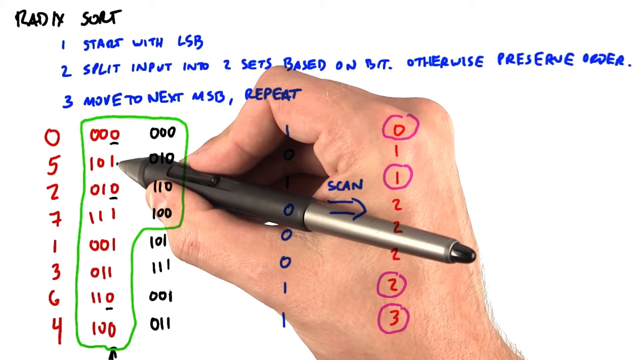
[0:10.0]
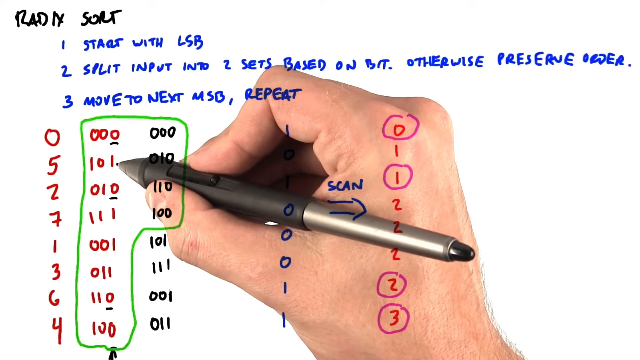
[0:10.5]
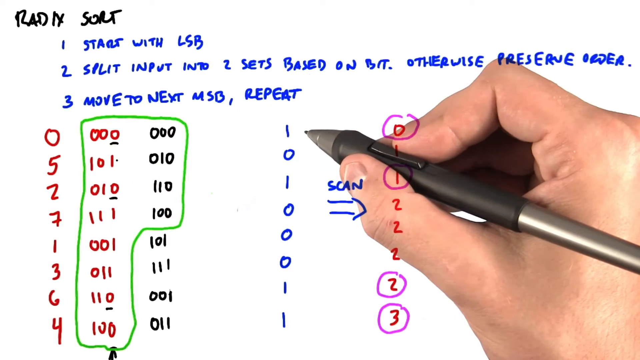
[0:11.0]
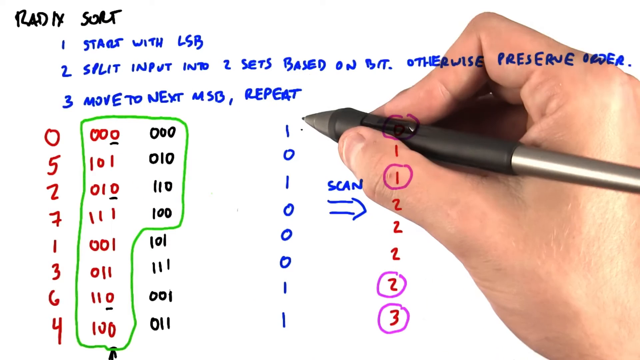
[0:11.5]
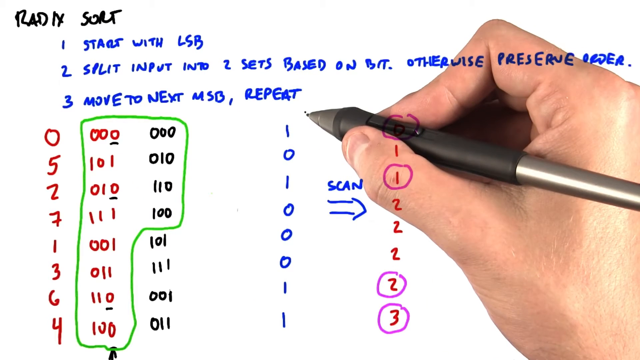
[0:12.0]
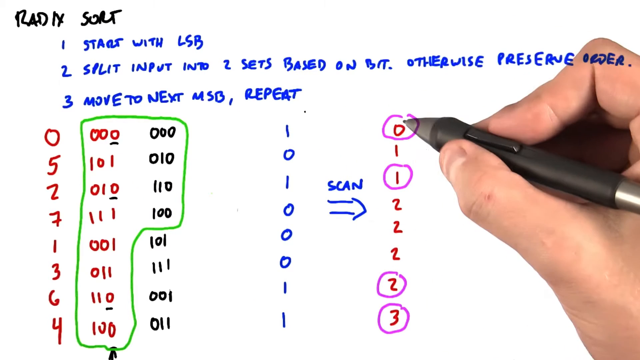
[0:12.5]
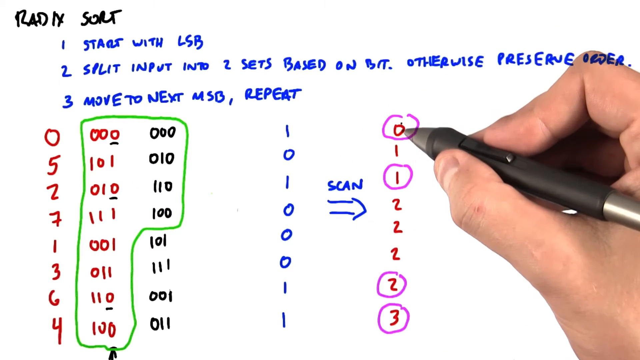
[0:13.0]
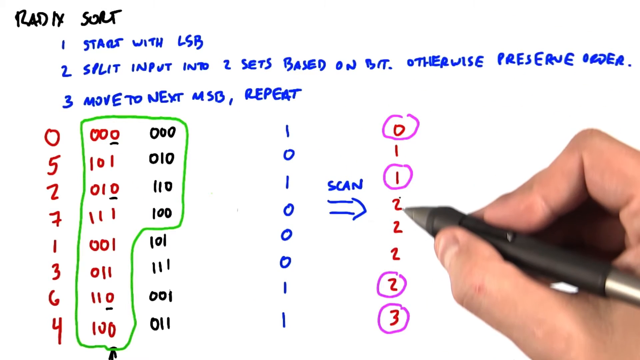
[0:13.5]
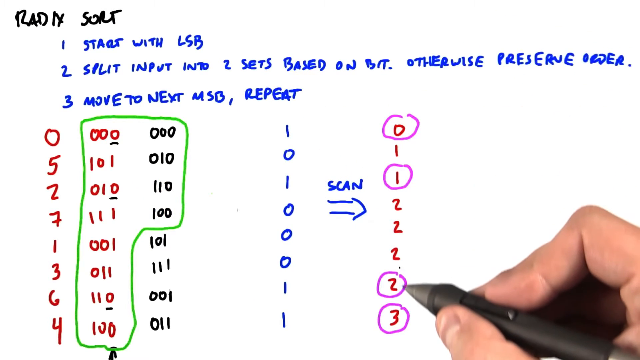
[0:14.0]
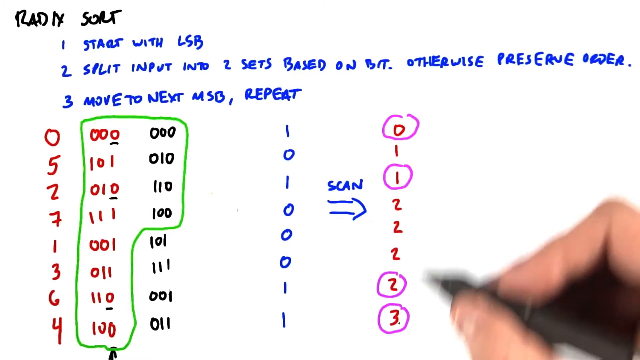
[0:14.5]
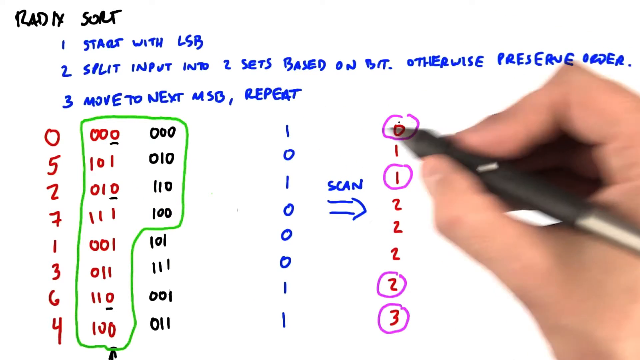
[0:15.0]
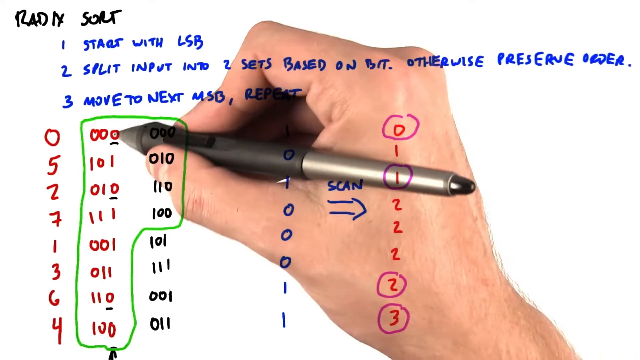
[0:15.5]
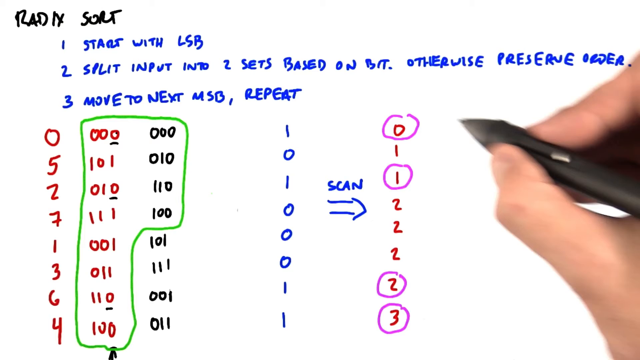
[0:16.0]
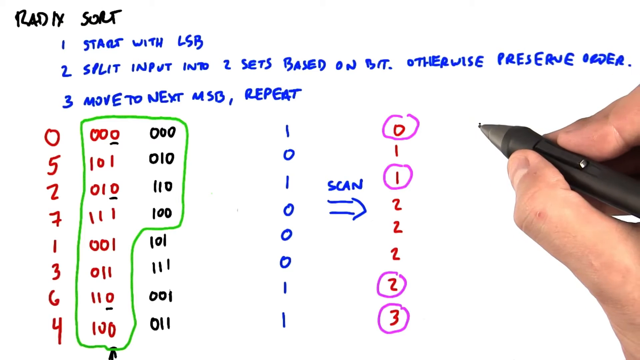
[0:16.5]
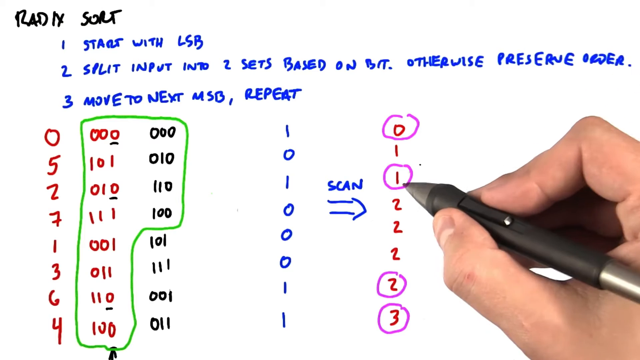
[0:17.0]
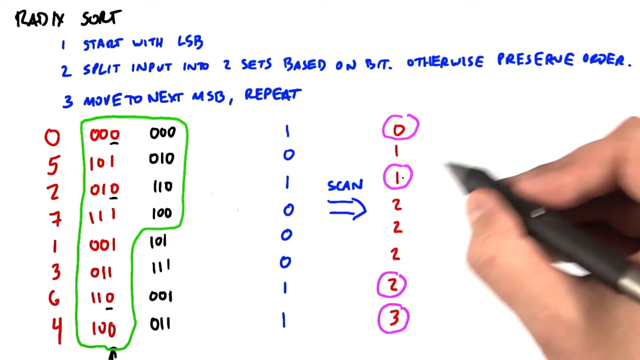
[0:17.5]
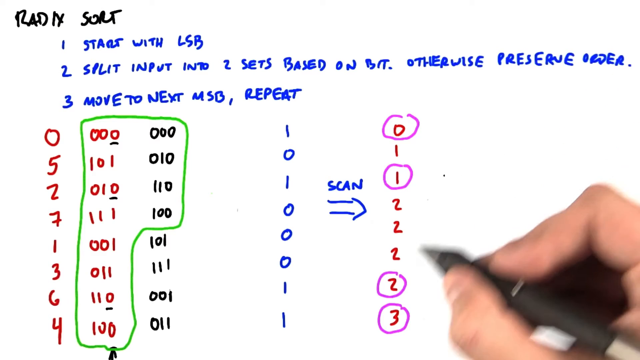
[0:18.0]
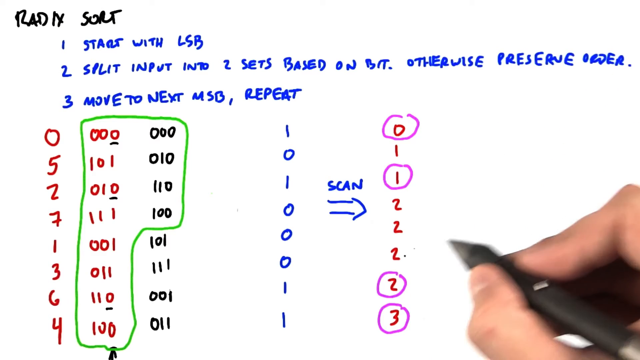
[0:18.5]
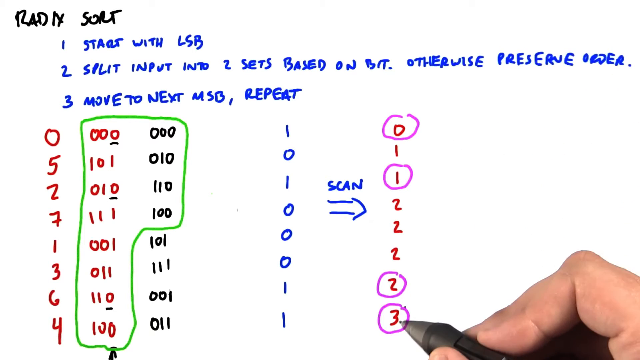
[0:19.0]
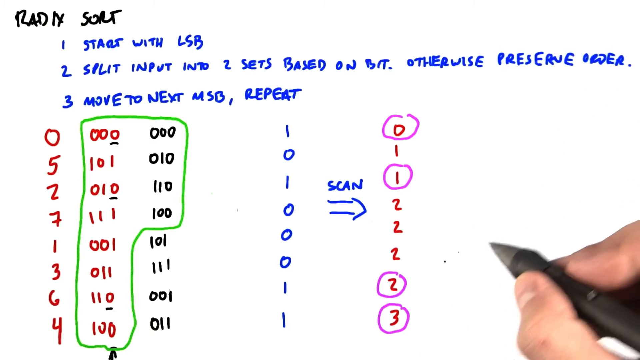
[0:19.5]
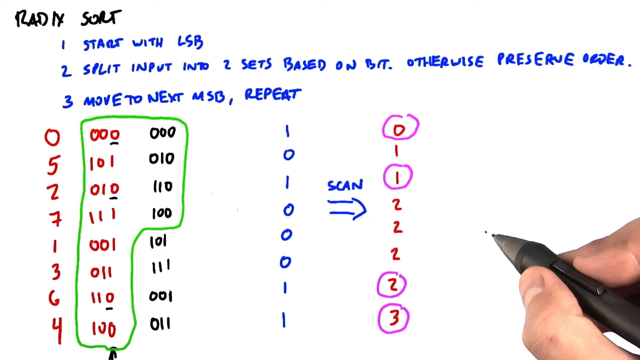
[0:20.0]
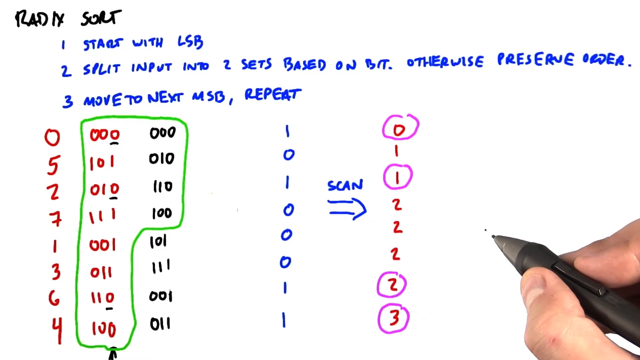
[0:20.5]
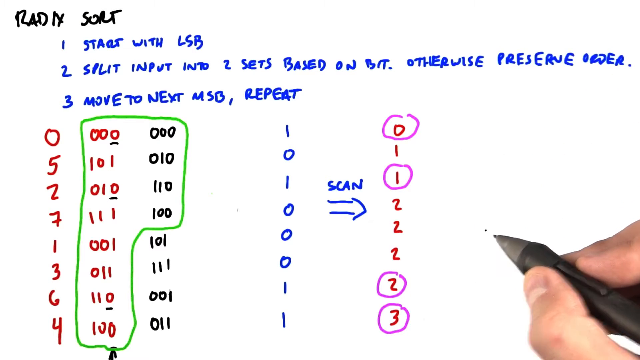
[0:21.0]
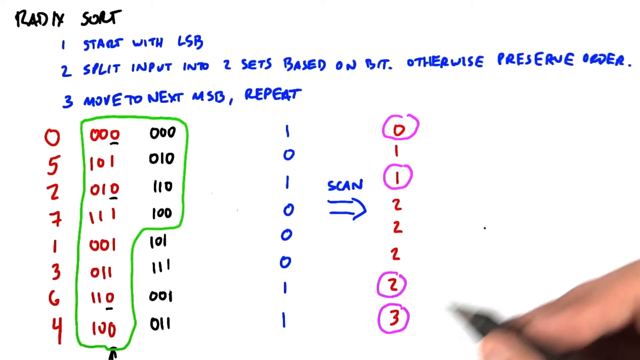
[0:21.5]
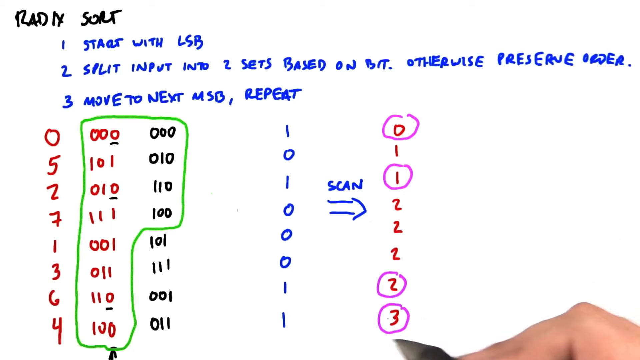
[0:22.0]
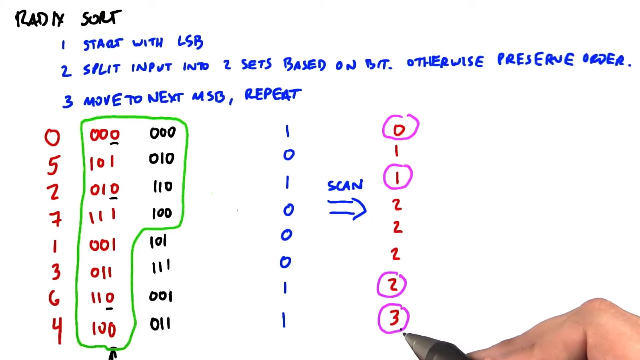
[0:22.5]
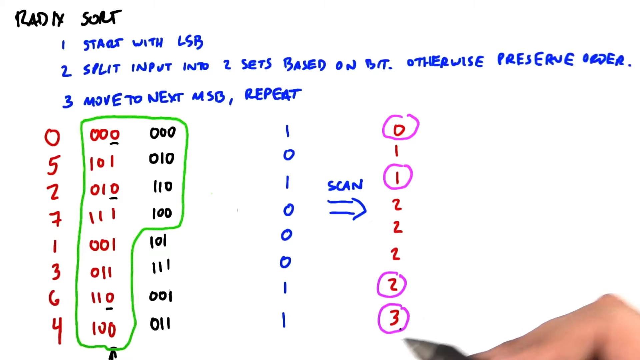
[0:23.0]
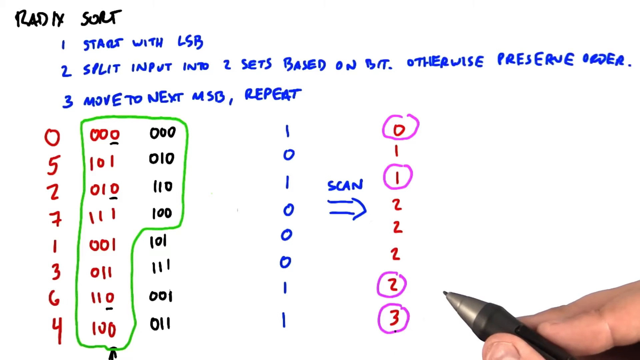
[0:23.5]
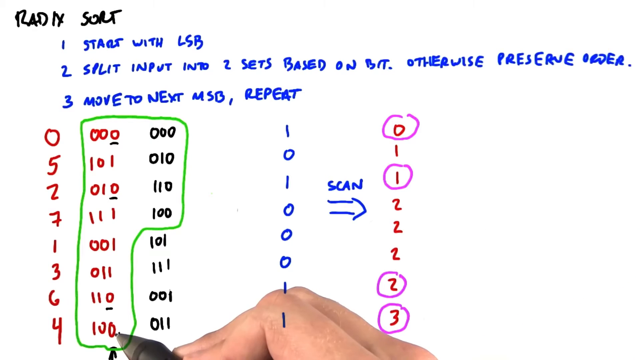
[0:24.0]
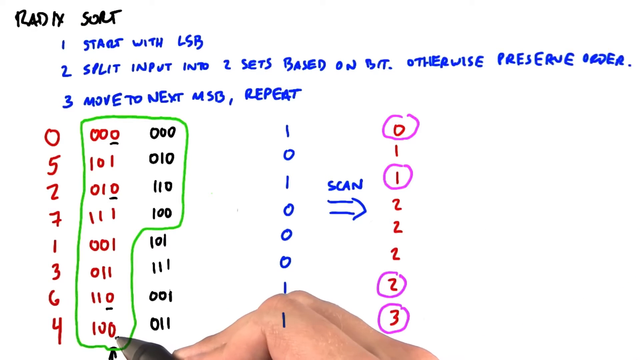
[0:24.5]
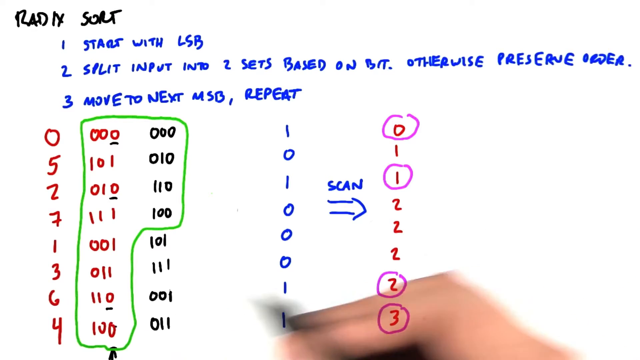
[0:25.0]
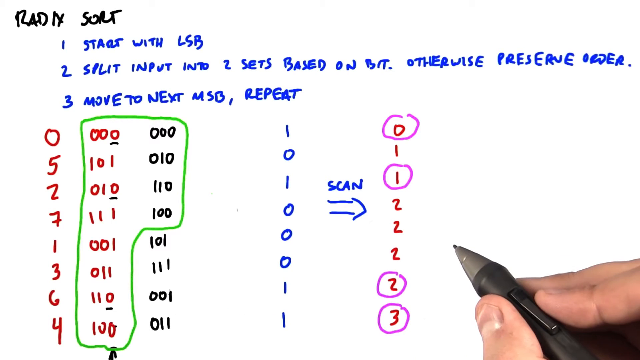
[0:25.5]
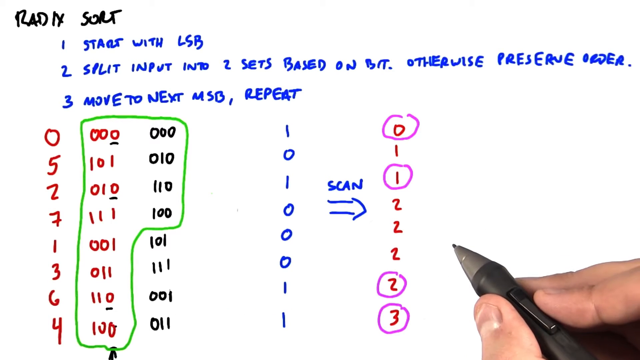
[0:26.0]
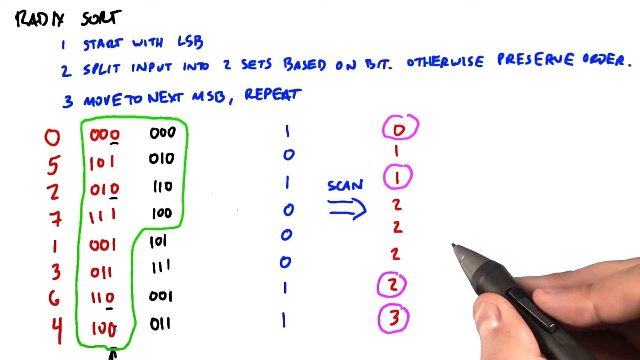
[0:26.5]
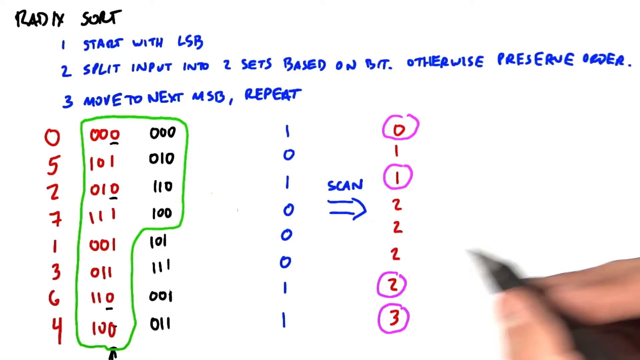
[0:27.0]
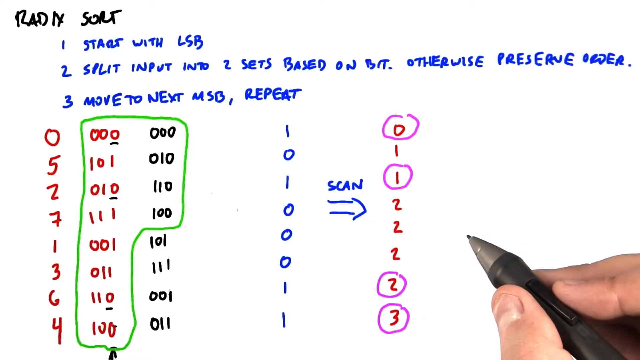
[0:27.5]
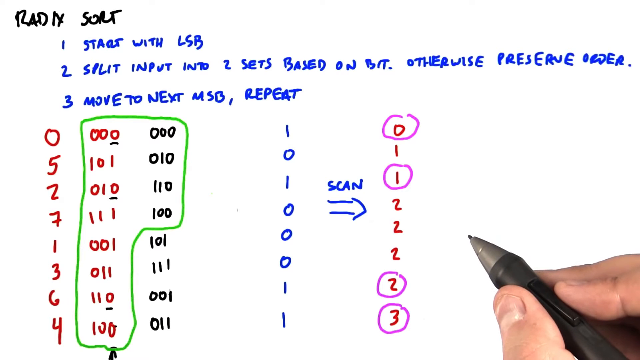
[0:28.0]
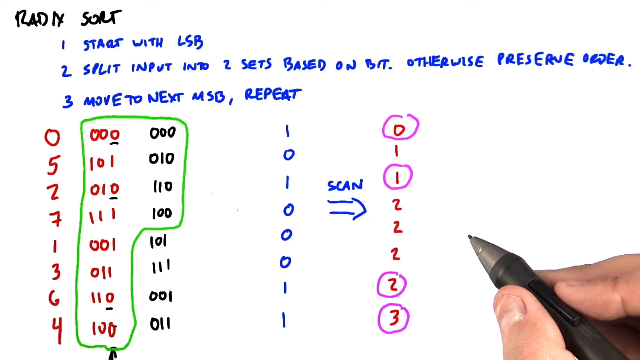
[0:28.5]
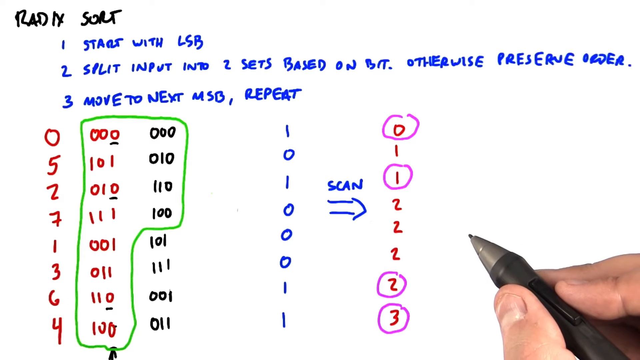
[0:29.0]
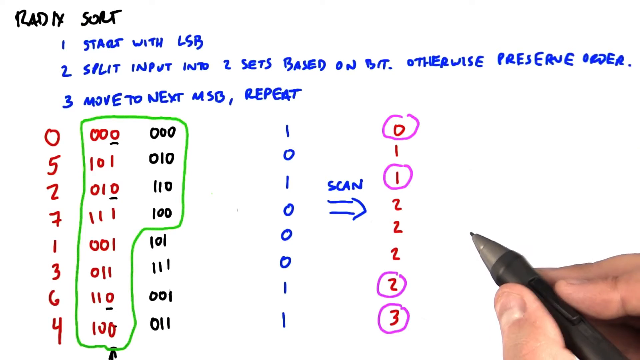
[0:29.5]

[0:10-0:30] Someone is working on some math. At the top is the heading "RADIX sort," followed by a numbered list: 1, "start with LSB"; 2, "split input into two sets based on bit"; 3, "move to next MSB, repeat." Their hand is visible on the screen, holding the mouse pointer or the stylus, and they move it around on the screen with their right hand as they work on the math, pointing out different areas. At one point they go to the right side of the screen and point out the numbers written in red there, which read from top to bottom 0, 1, 1, 2, 2, 2, 2, 3. Of these, the first 0, the second 1, the last 2, and the 3 are circled in that column on the right side of the page.